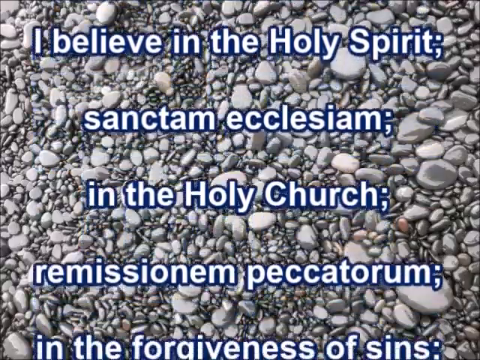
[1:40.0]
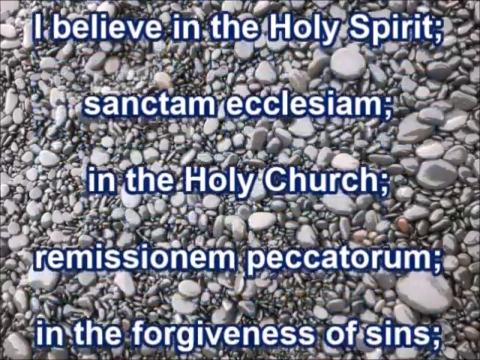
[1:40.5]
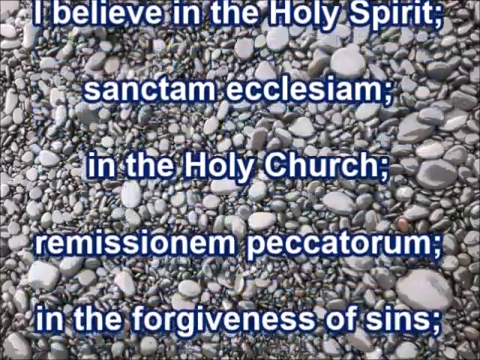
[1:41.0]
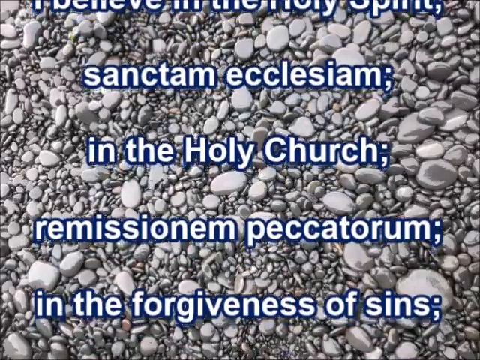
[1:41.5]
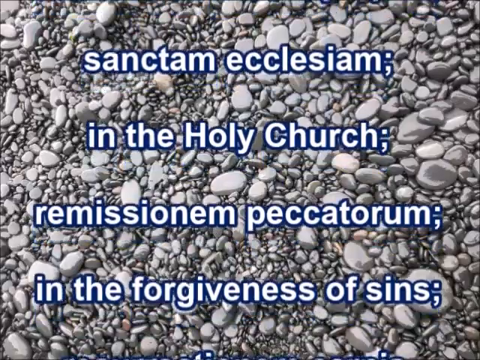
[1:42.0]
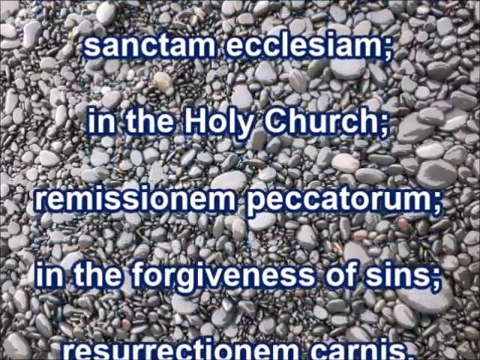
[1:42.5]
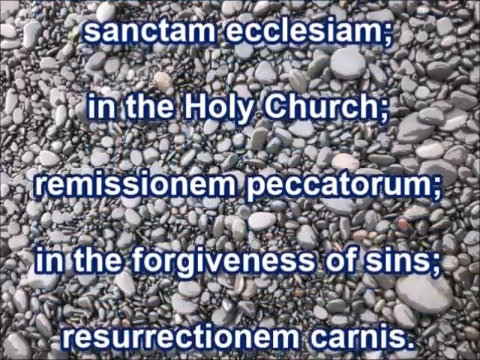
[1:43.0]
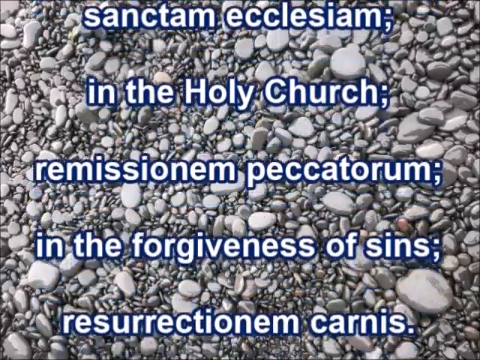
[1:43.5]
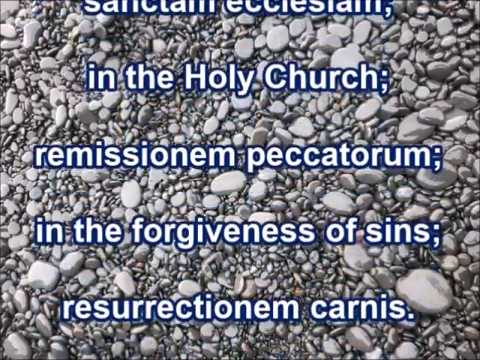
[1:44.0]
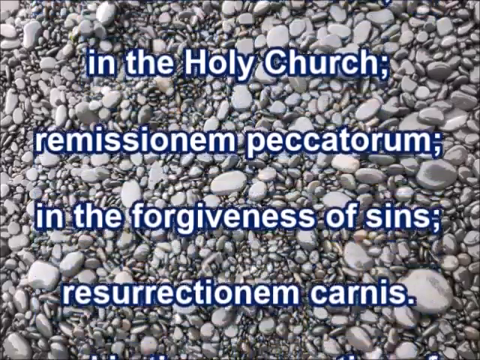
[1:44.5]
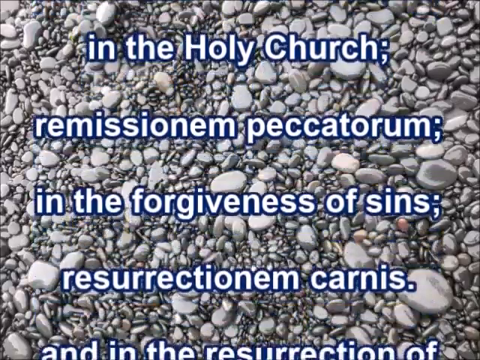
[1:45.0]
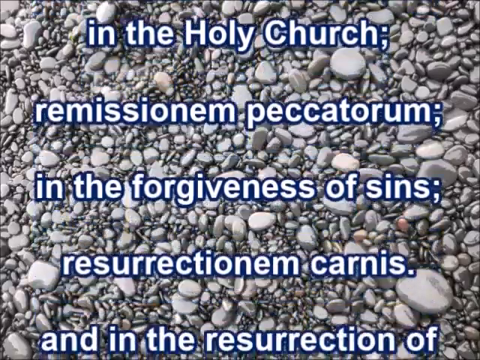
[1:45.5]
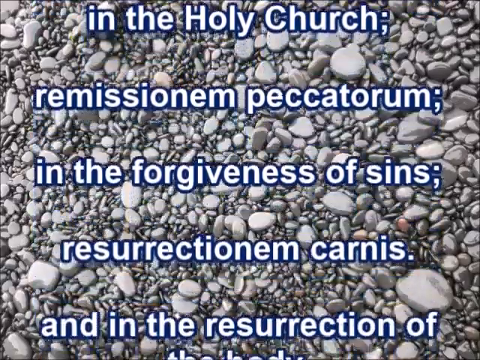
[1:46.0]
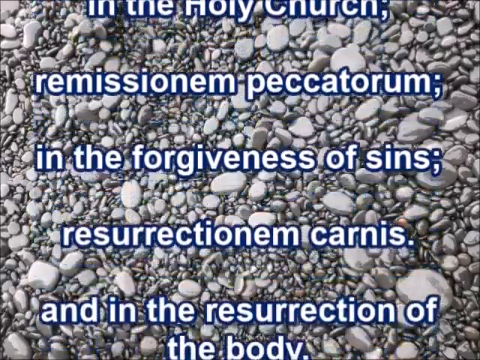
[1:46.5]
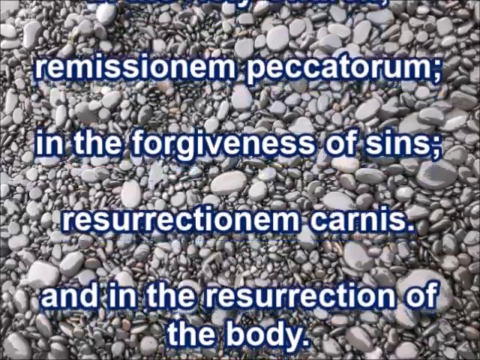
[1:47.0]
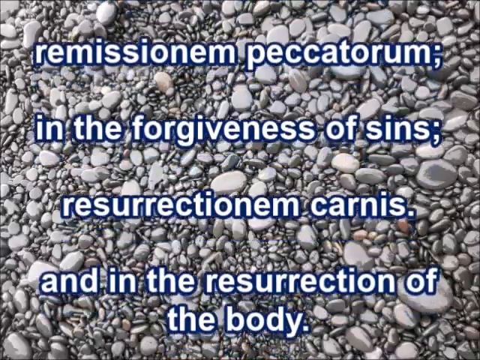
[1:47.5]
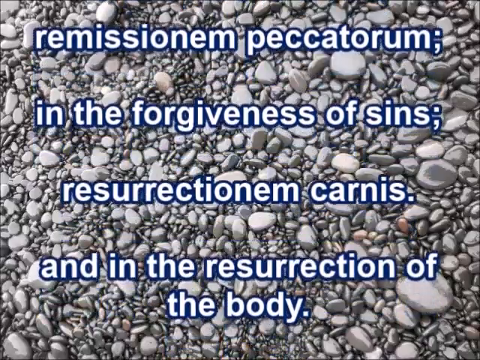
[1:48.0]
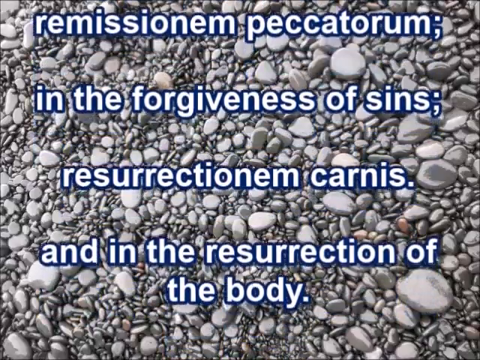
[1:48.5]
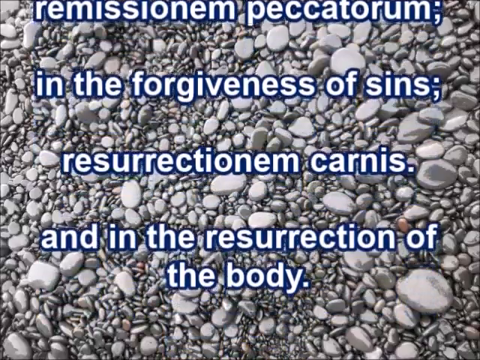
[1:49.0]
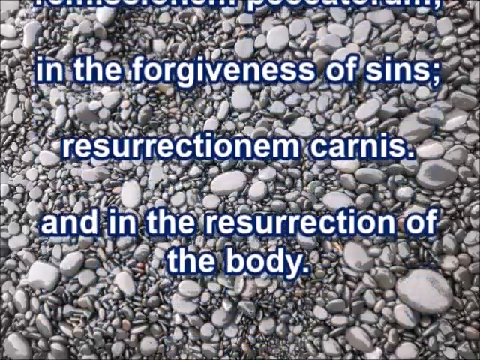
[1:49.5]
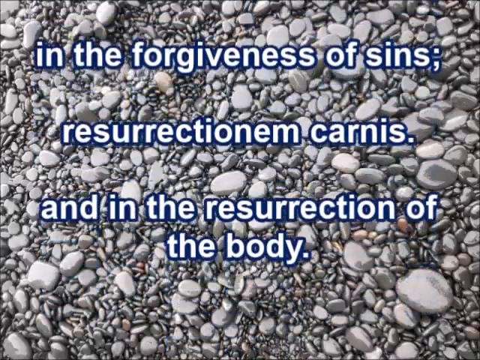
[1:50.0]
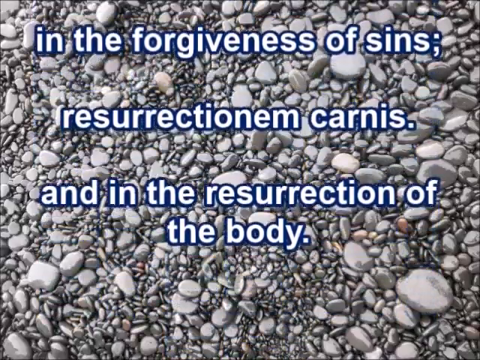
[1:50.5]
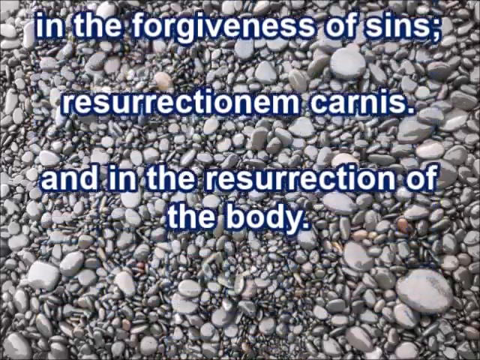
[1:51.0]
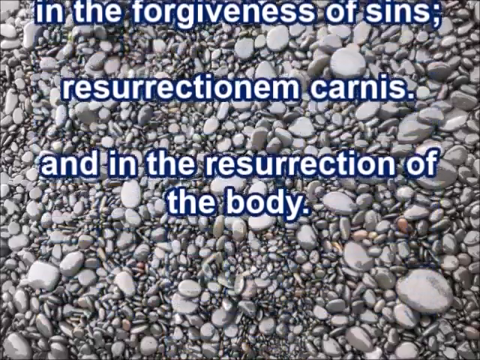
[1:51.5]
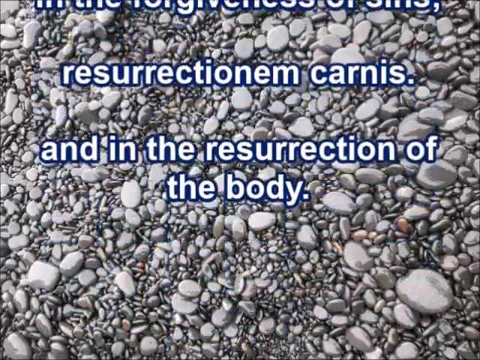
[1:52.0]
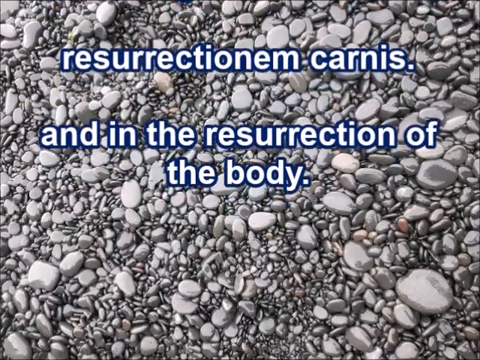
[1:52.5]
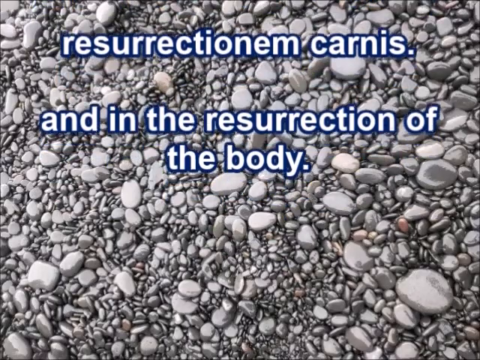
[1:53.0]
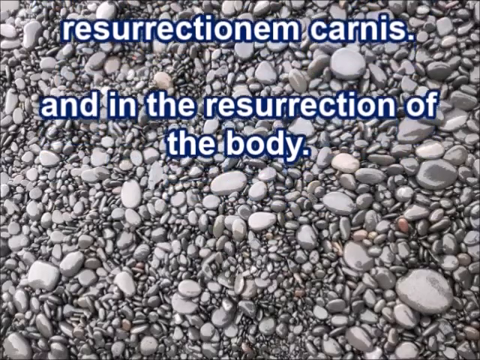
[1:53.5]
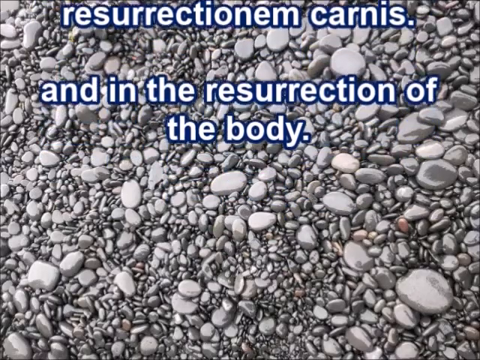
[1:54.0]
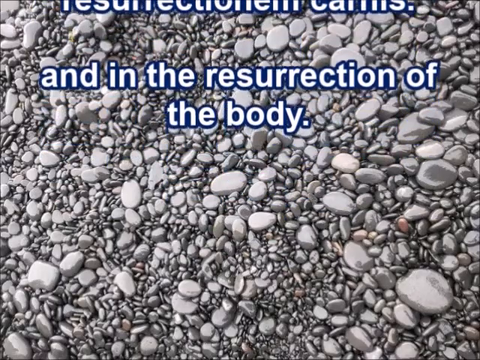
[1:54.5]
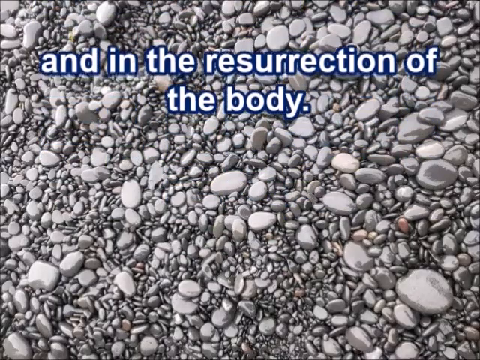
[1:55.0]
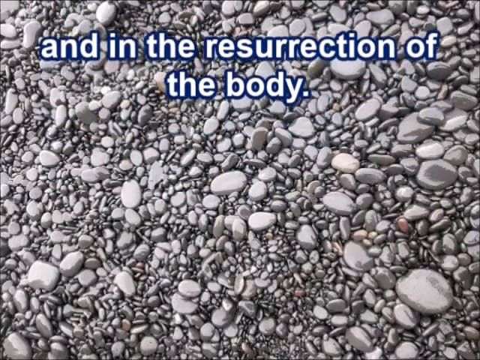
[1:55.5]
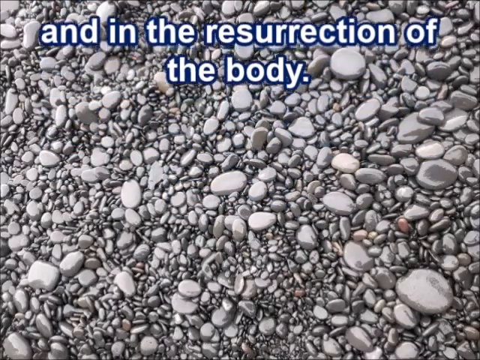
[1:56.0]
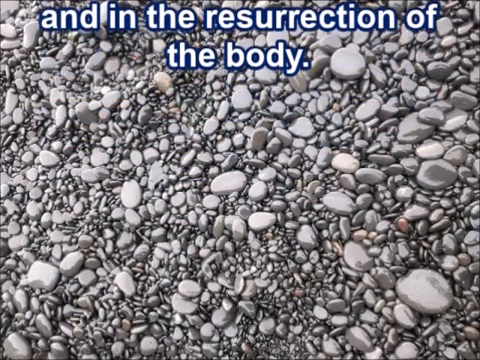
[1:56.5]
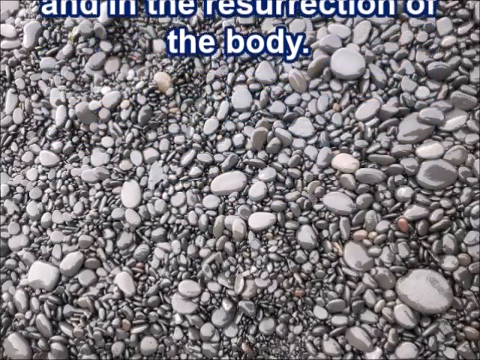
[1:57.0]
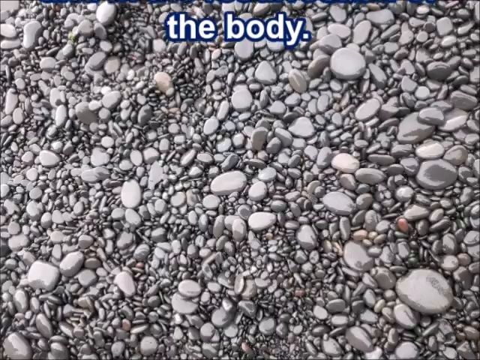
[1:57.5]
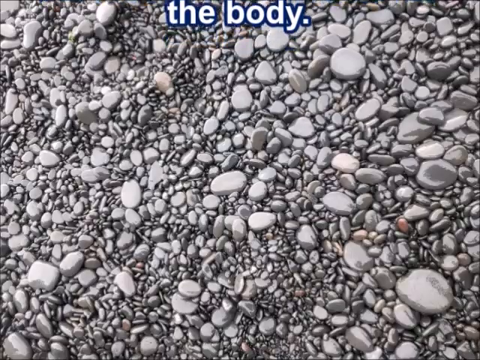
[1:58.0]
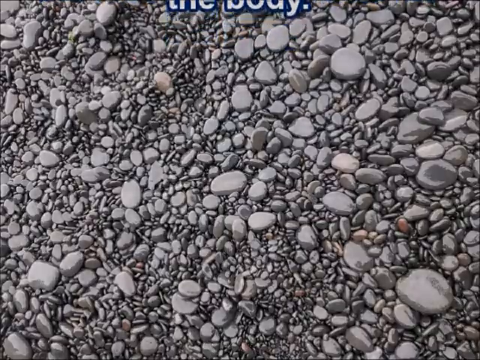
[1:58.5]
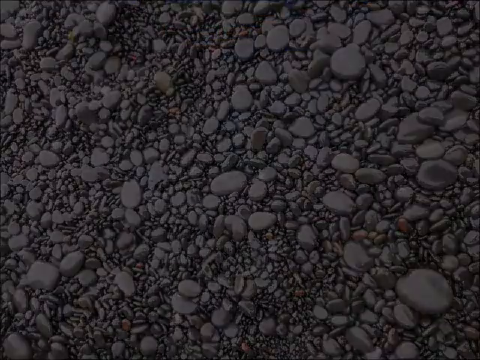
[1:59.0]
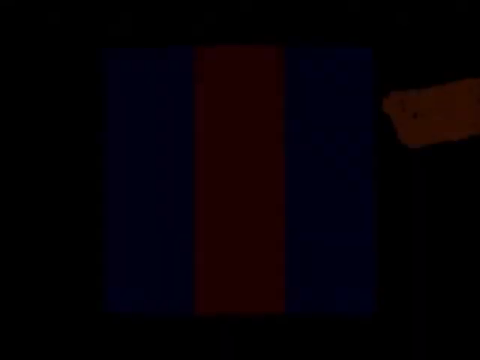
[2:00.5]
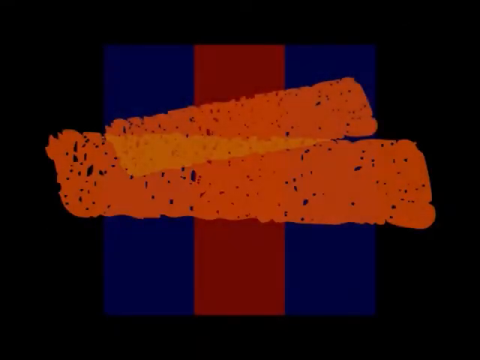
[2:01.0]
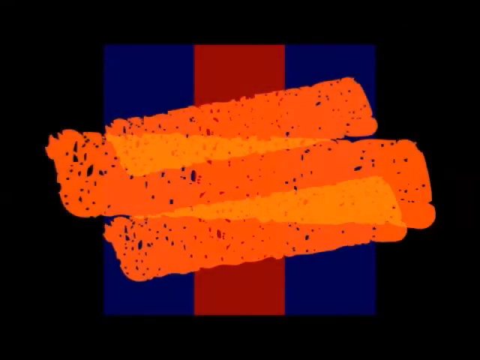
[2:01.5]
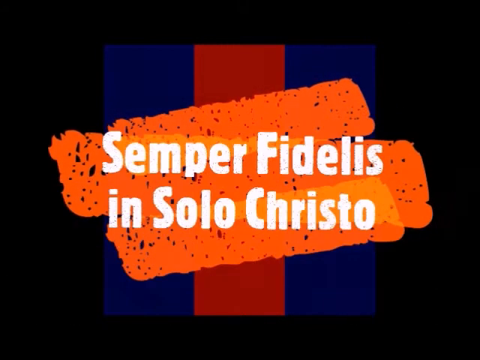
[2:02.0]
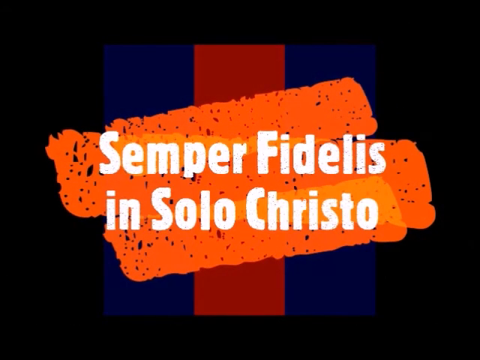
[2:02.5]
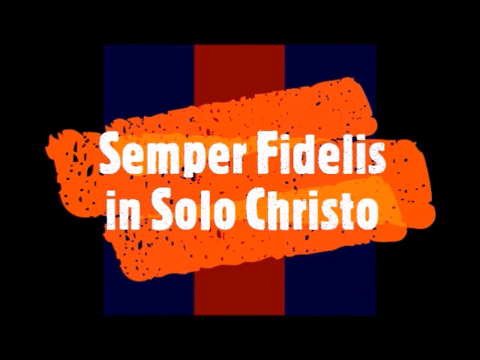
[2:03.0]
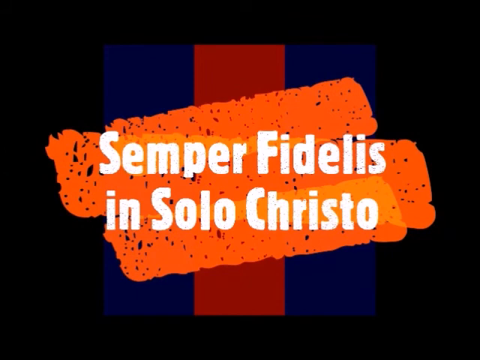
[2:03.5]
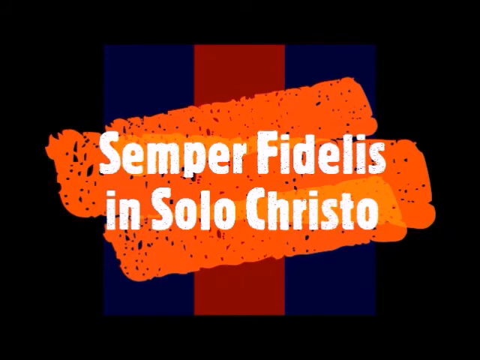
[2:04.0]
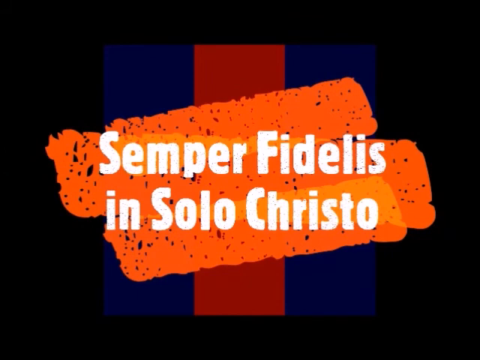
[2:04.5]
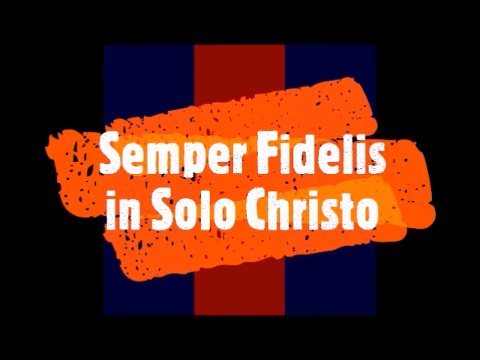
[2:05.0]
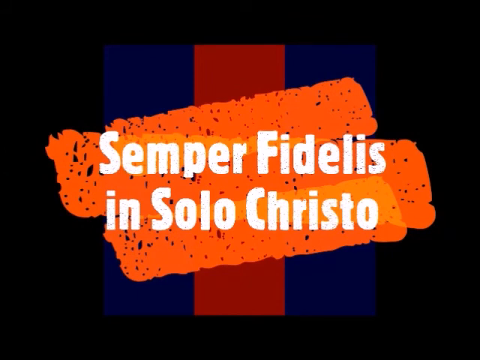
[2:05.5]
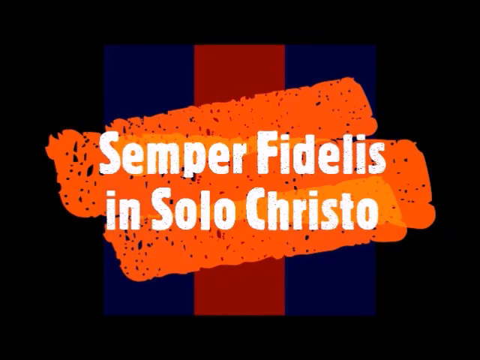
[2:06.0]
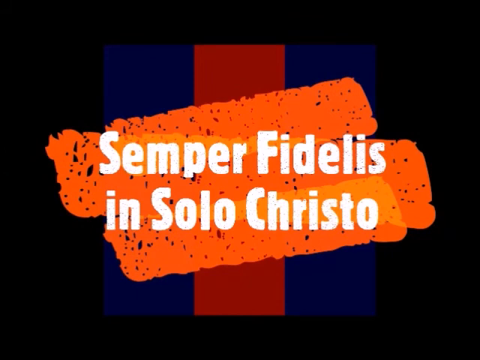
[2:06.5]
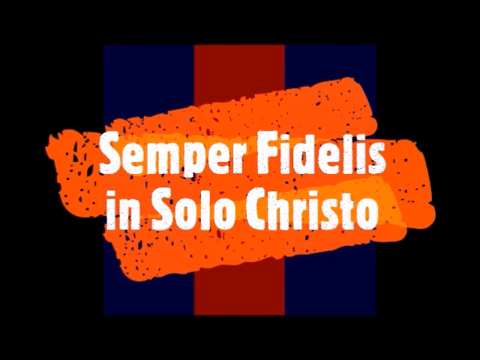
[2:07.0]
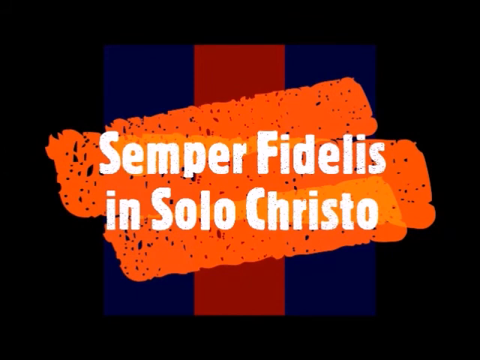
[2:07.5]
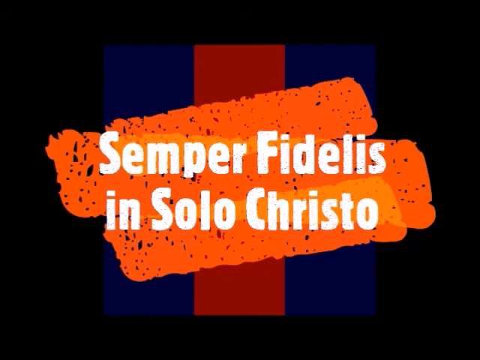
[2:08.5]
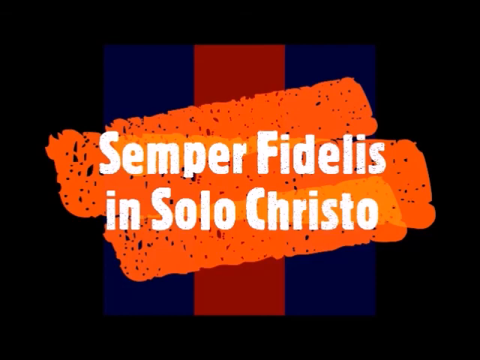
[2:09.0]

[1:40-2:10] The text continues with "in the holy church," followed by the Italian version, then "the forgiveness of sins," followed by the Italian, and finally "the resurrection of the body," where the text ends. The video then returns to the title seen at the beginning, shown with a rustic paintbrush-stroke design in what may be blue, red and bright orange. It reads "in semper fides and solo Christo," the same title but with a different setup from the one at the beginning.